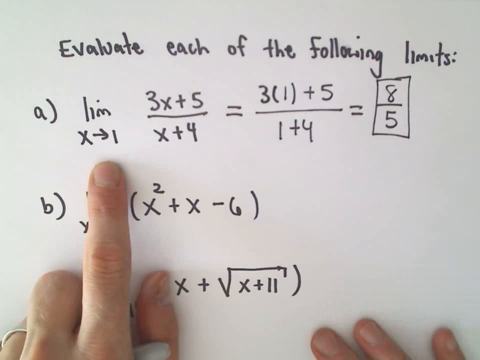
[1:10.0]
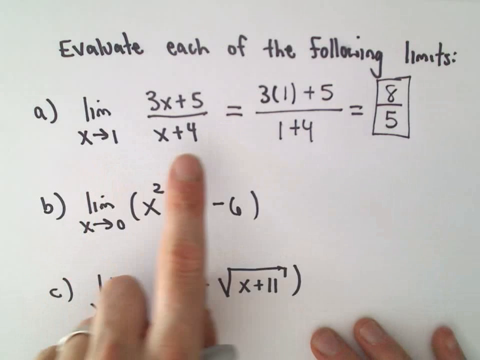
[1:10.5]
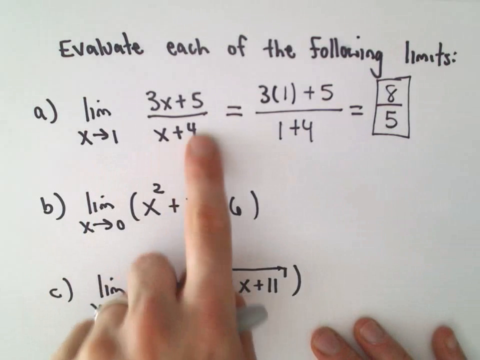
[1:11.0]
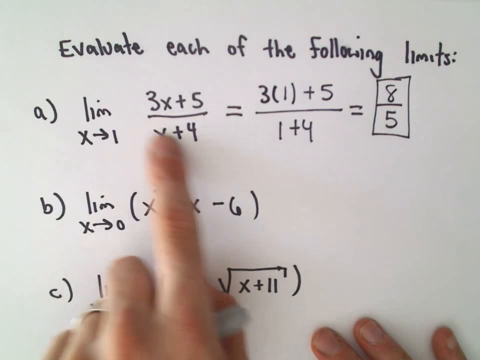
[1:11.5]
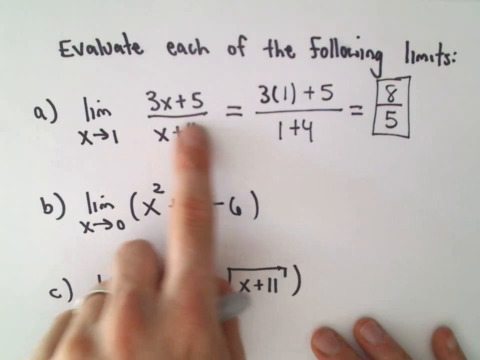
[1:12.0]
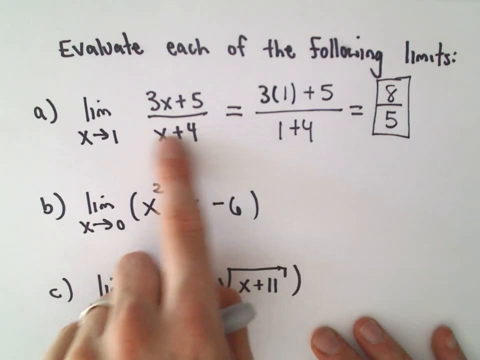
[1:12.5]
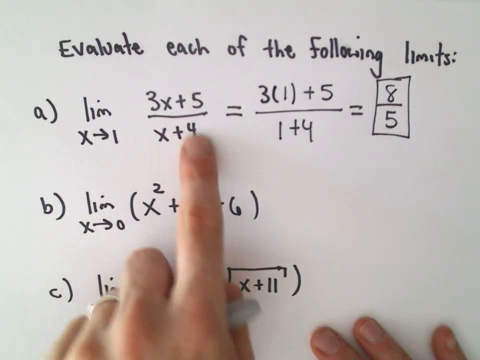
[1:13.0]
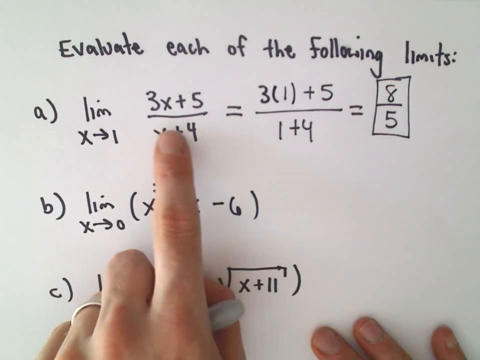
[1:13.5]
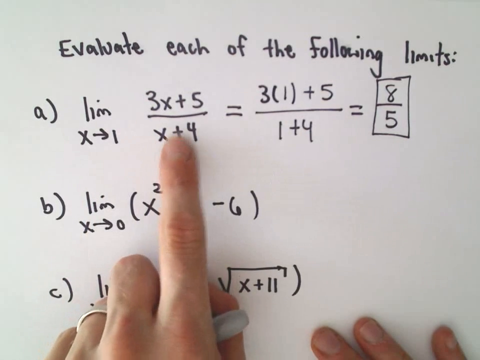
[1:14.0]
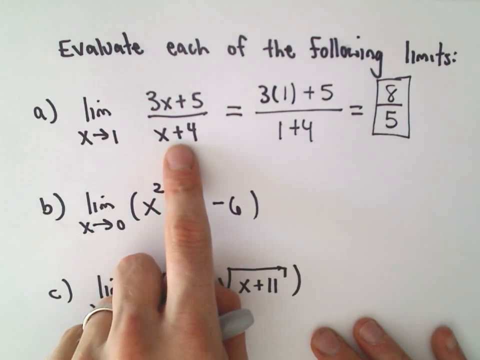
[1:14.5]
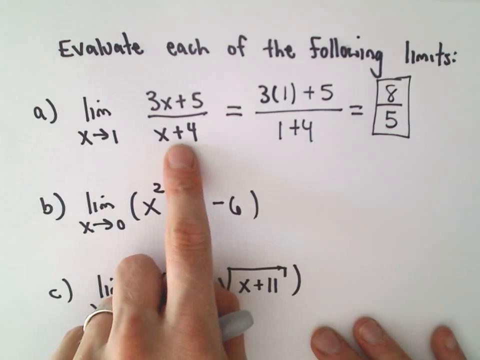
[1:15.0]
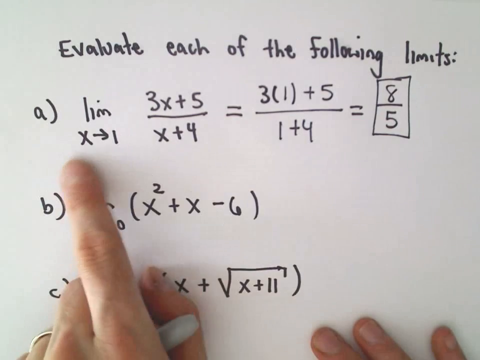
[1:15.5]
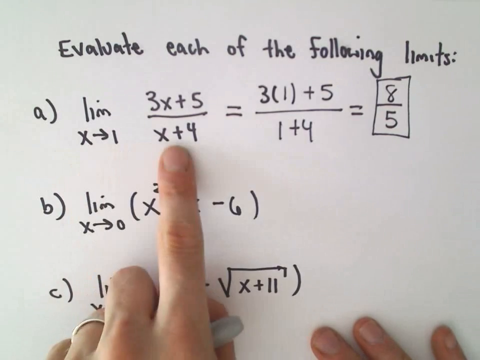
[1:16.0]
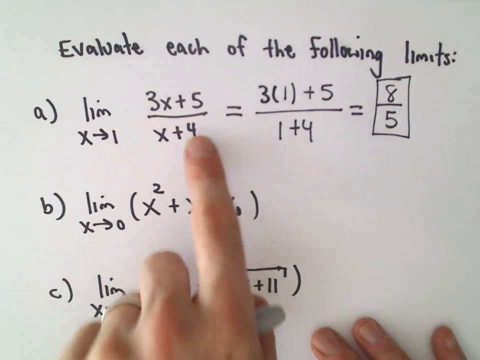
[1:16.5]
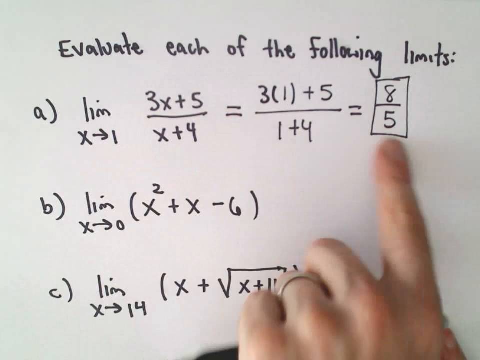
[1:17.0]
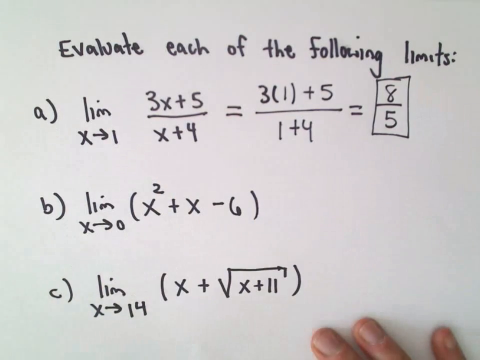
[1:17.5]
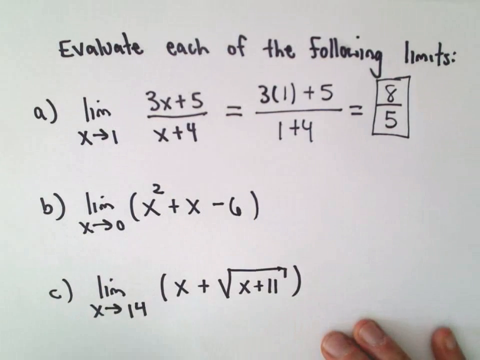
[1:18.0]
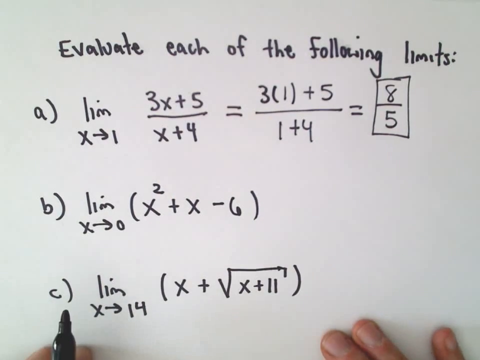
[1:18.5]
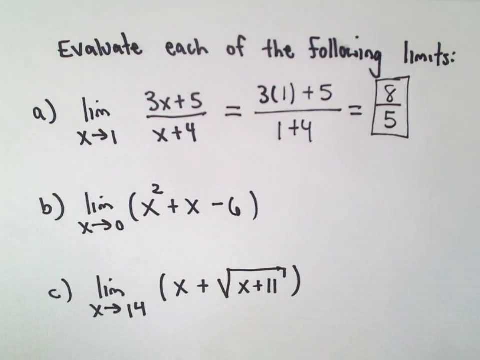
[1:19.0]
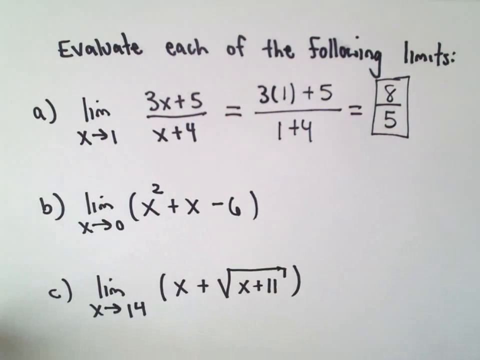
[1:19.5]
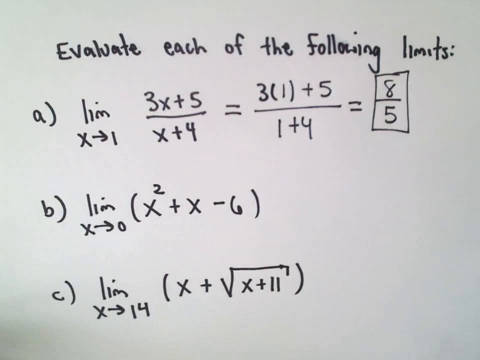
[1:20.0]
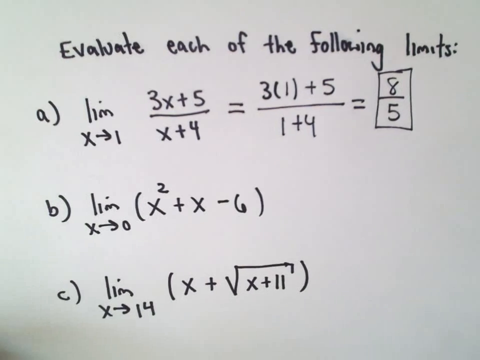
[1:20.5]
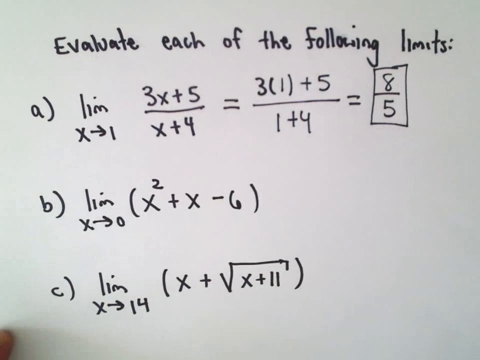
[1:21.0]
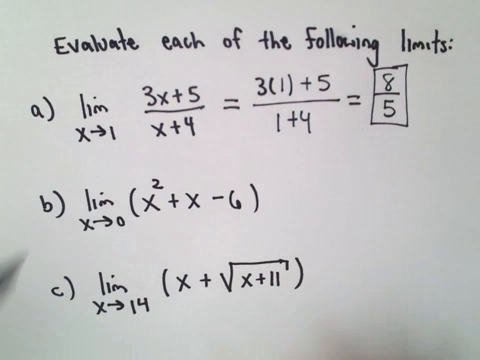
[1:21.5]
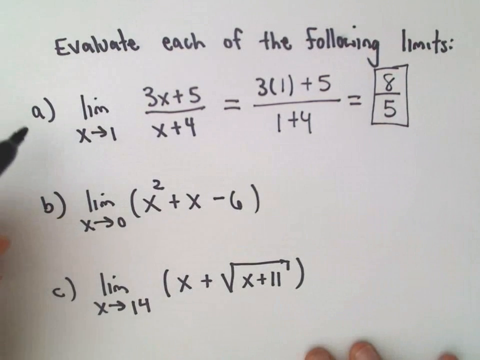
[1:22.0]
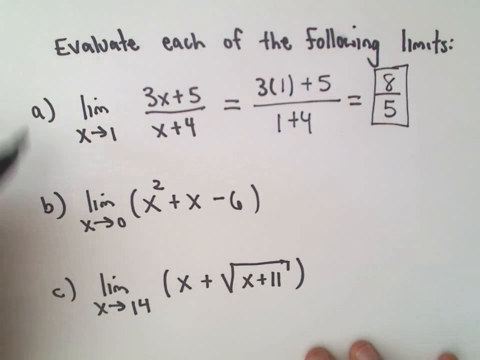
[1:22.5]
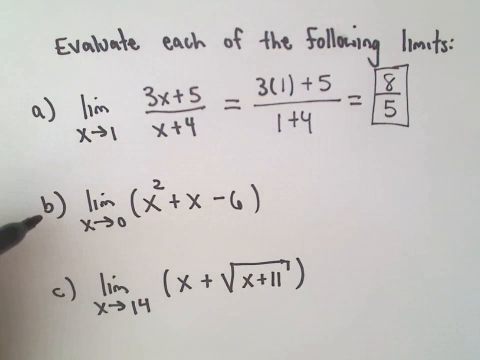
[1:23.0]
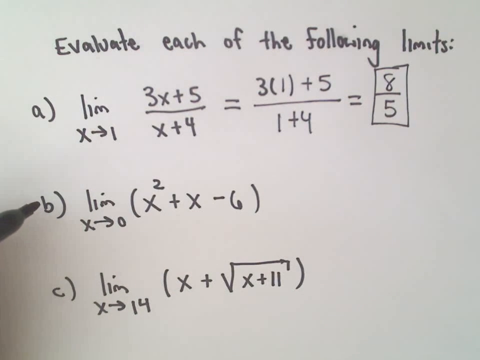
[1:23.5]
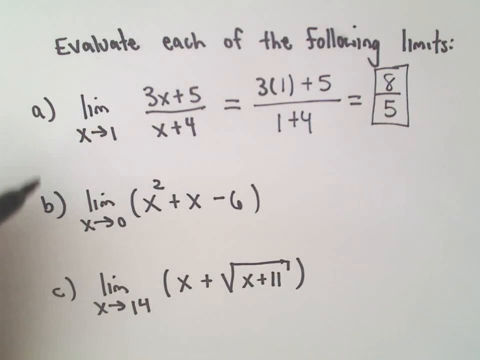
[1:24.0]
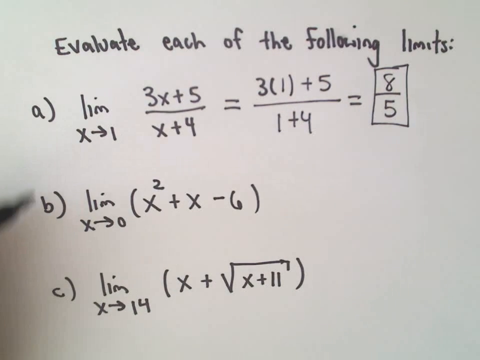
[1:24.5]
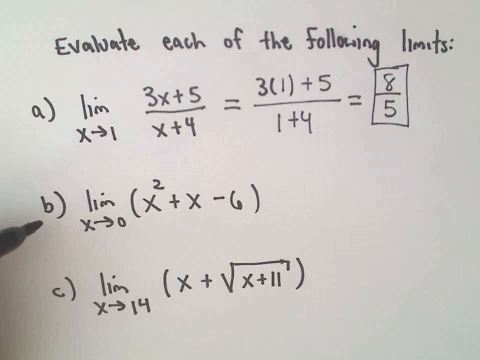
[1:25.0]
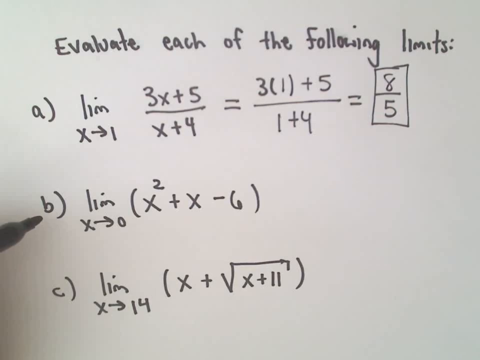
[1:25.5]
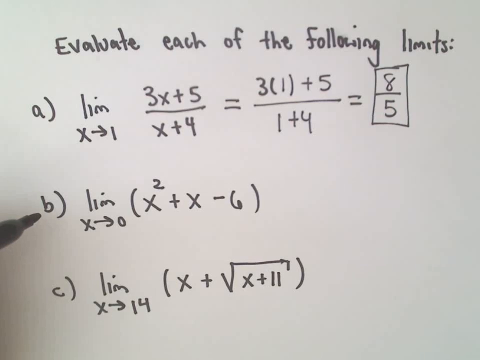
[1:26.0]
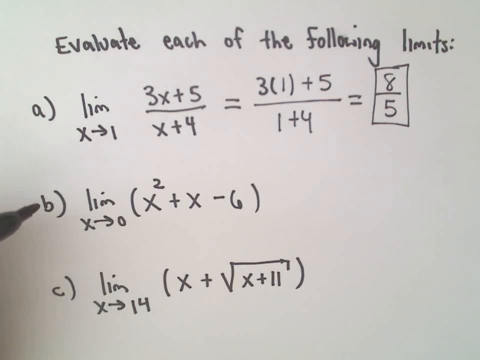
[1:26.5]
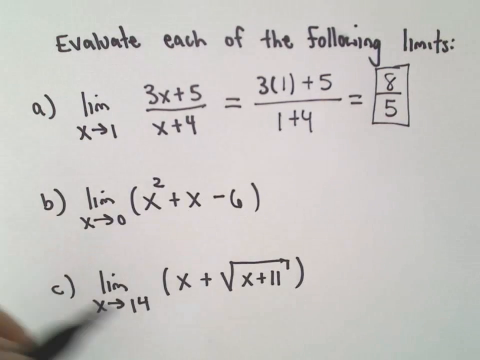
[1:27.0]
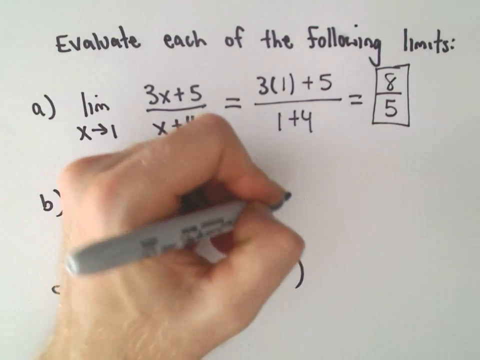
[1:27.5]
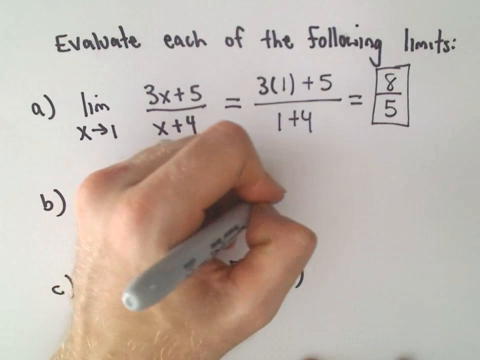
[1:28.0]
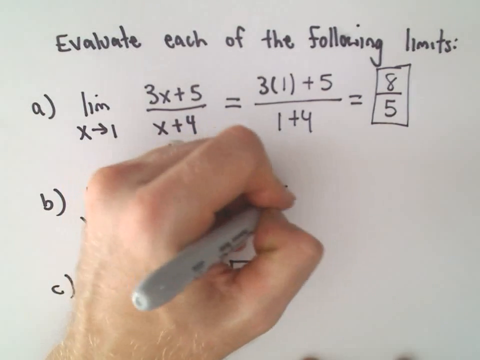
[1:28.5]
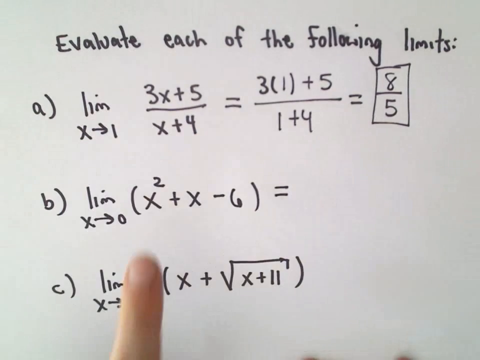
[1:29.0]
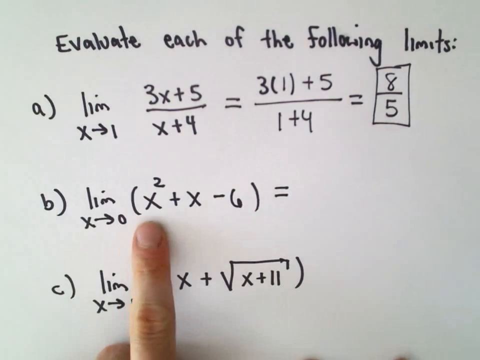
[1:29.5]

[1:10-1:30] The camera is steady on a white piece of paper with instructions and several equations. The man's hand points out each of the equations, switching between his hand and his sharpie. He points back at the second equation, then slightly shifts and adjusts the paper; the sharpie goes to the left of the screen, and he moves down to the equation and appears to write something not yet in view. At times his right hand appears to be touching the paper as if holding it down flat. He writes an equal sign but has not written the rest of the solution.